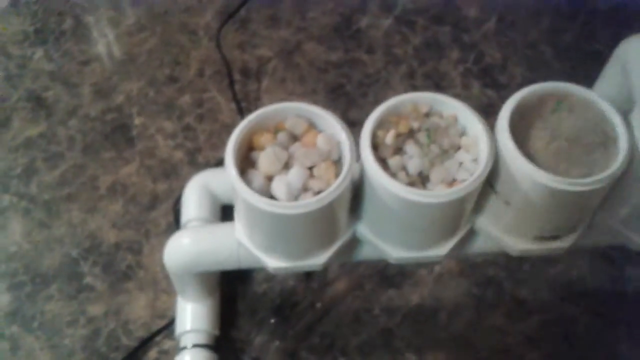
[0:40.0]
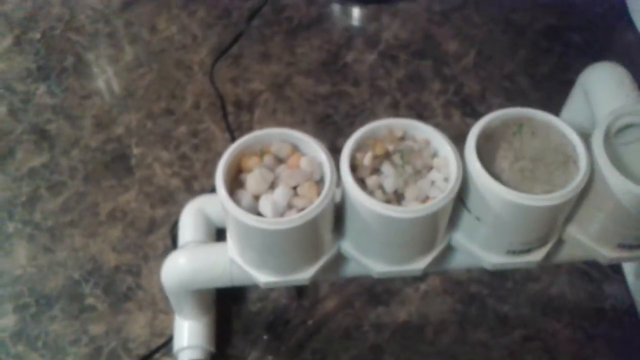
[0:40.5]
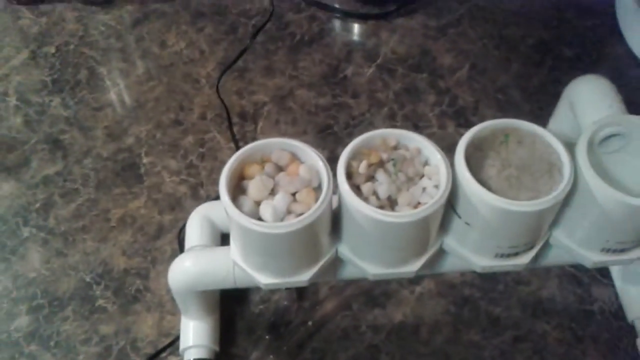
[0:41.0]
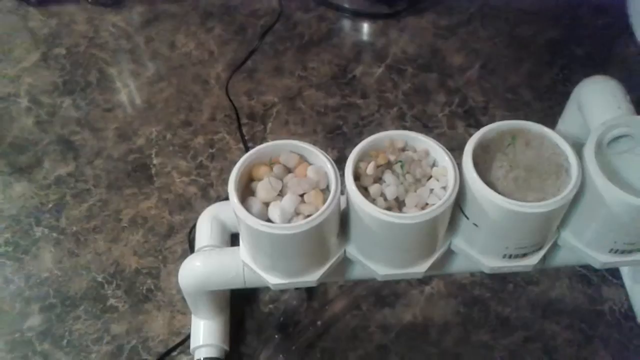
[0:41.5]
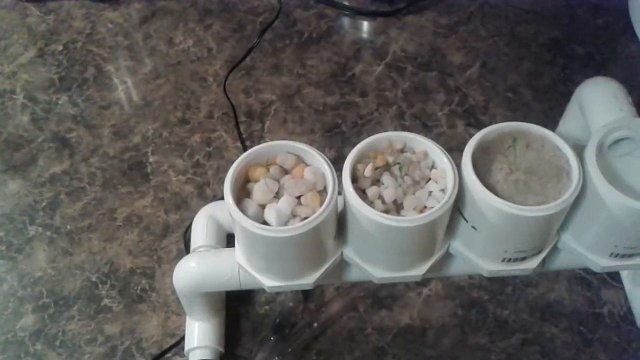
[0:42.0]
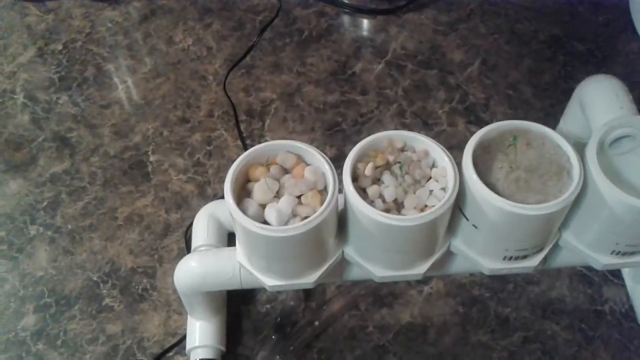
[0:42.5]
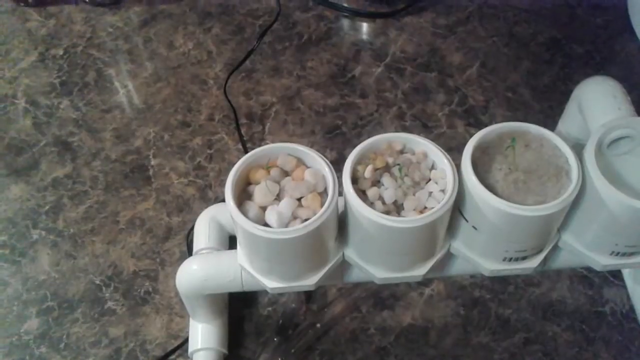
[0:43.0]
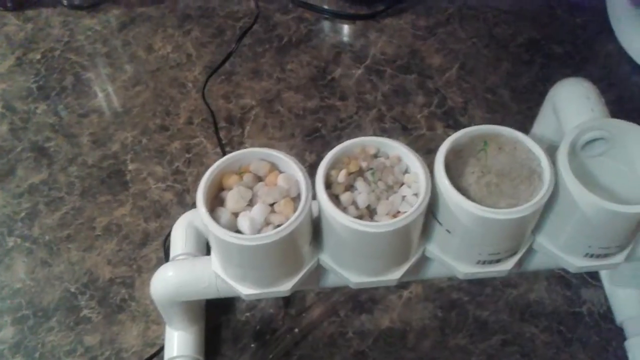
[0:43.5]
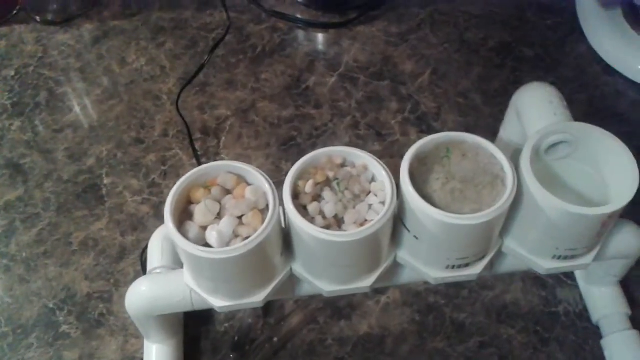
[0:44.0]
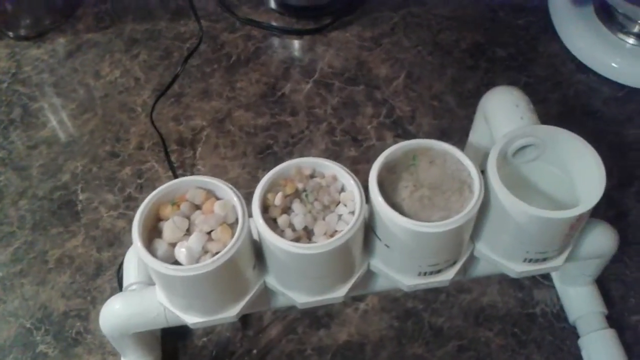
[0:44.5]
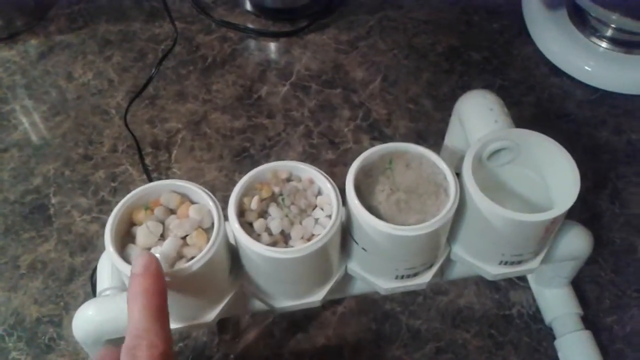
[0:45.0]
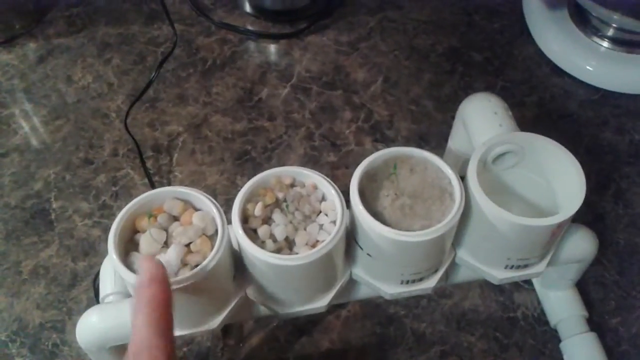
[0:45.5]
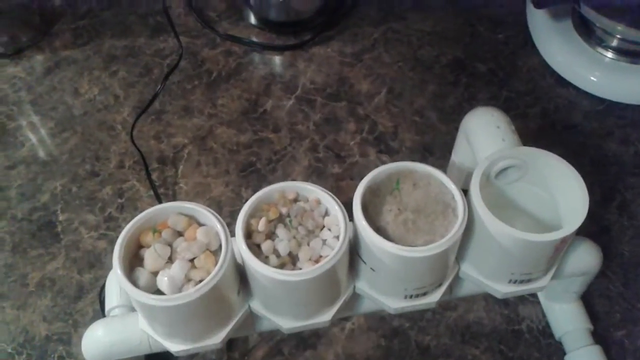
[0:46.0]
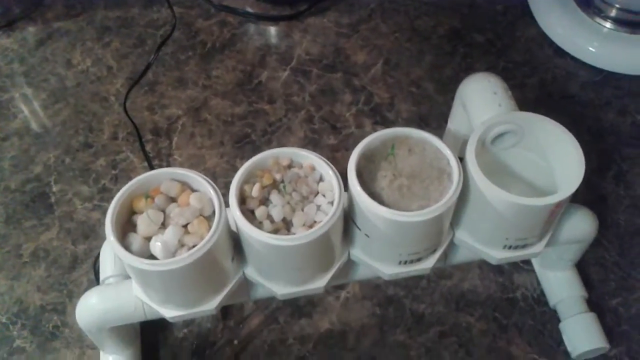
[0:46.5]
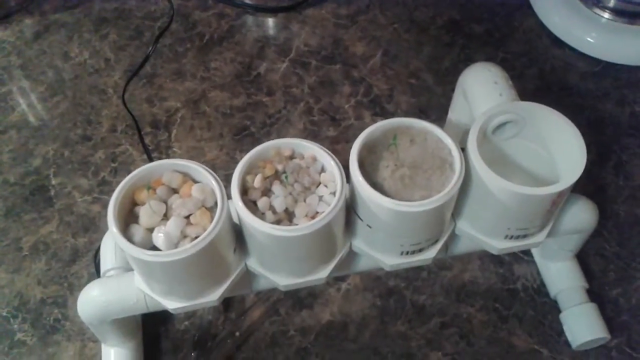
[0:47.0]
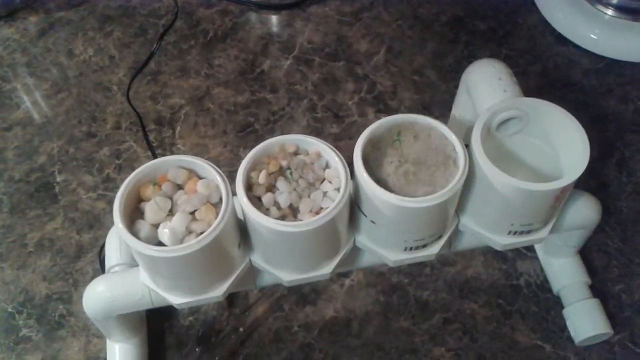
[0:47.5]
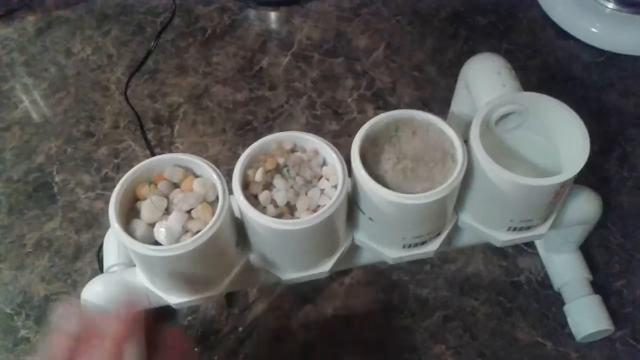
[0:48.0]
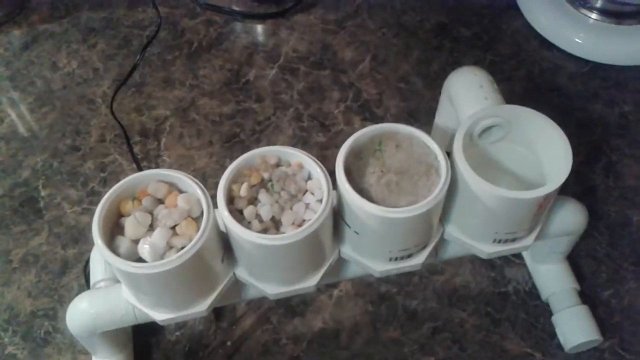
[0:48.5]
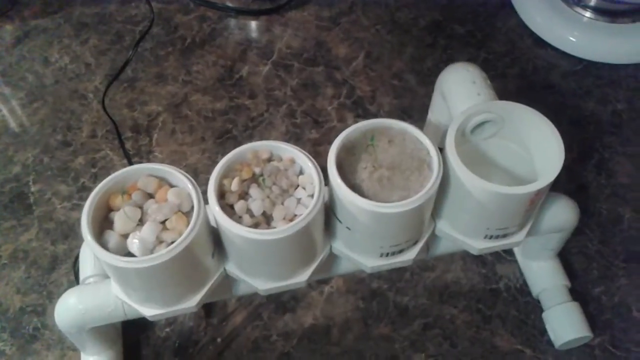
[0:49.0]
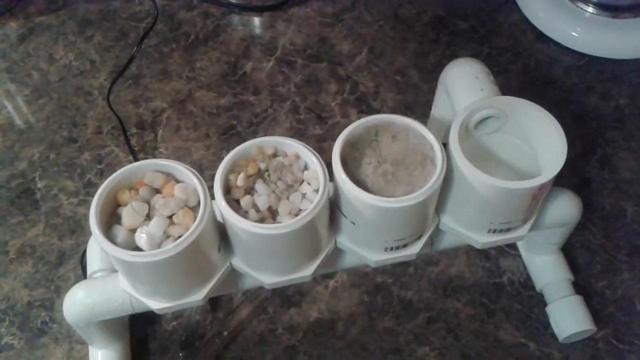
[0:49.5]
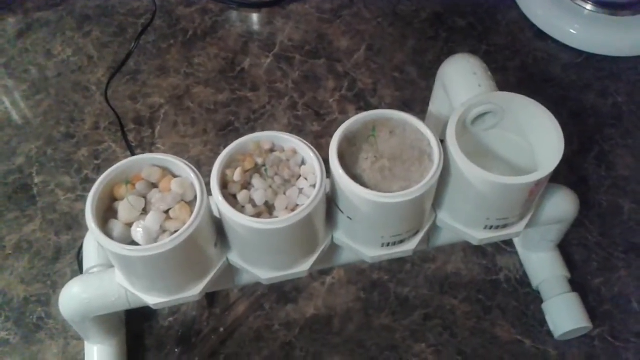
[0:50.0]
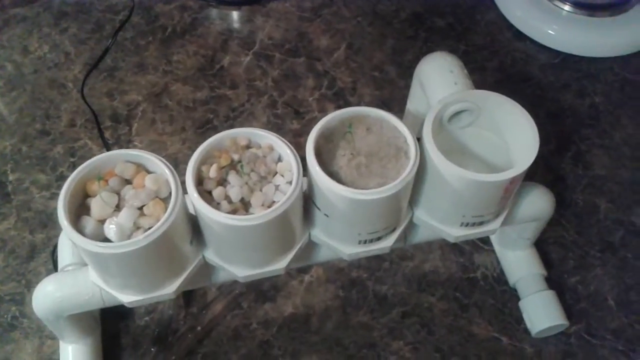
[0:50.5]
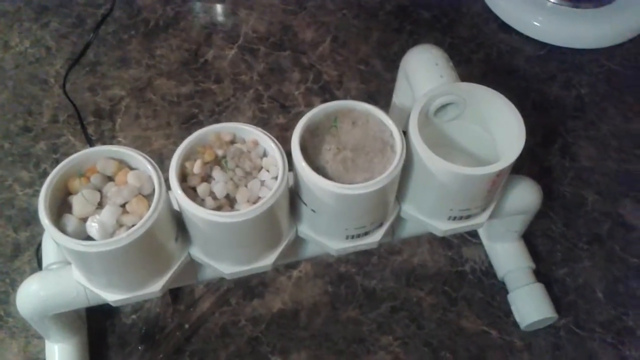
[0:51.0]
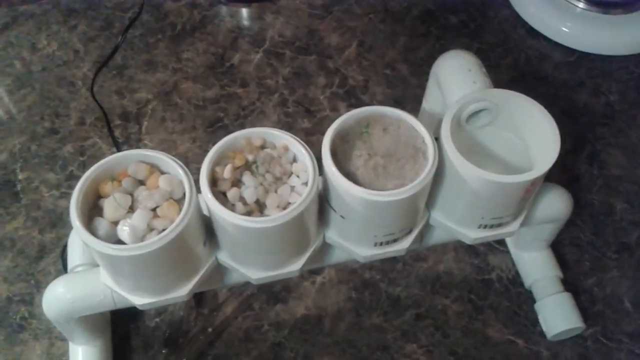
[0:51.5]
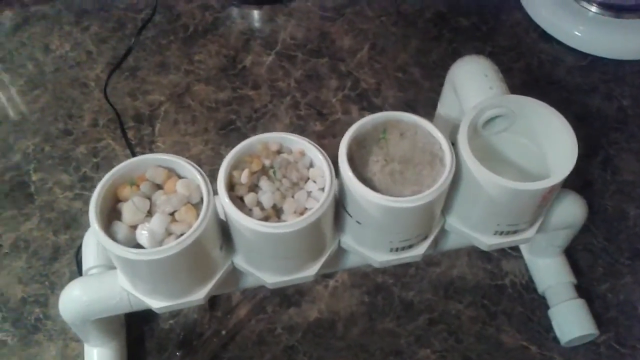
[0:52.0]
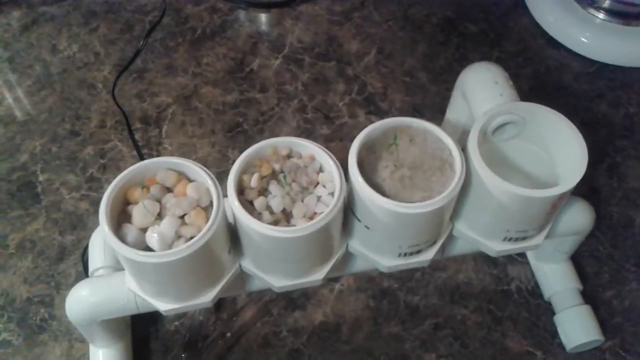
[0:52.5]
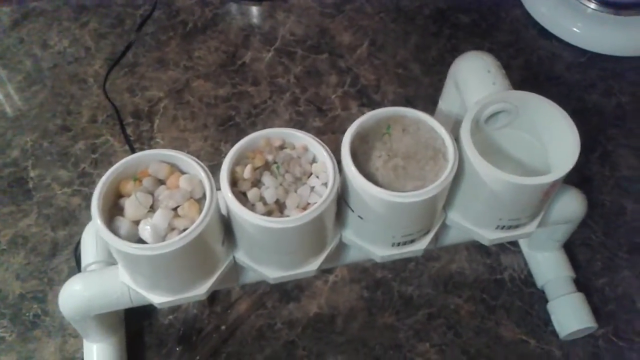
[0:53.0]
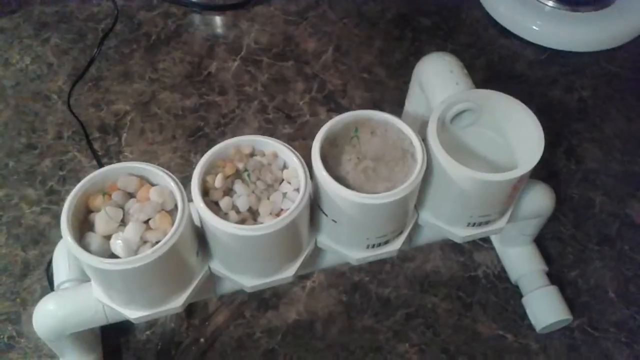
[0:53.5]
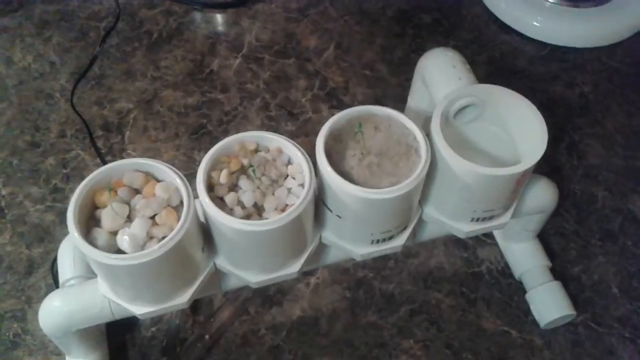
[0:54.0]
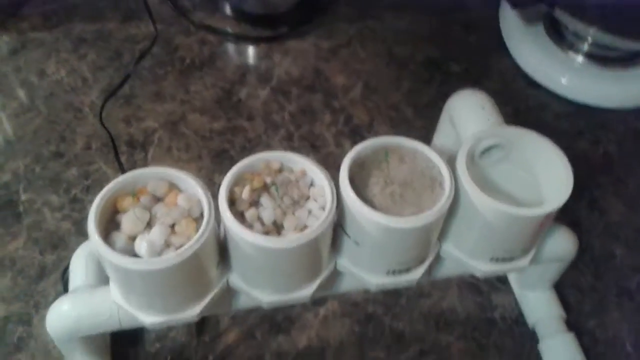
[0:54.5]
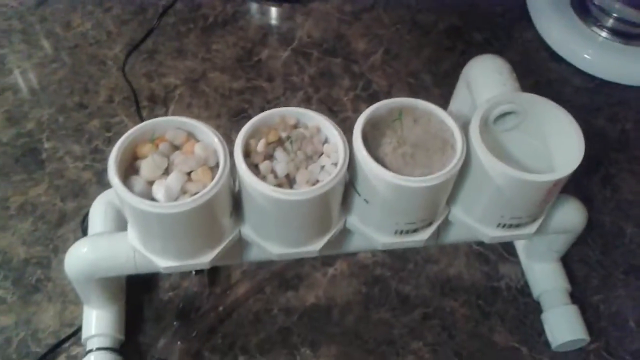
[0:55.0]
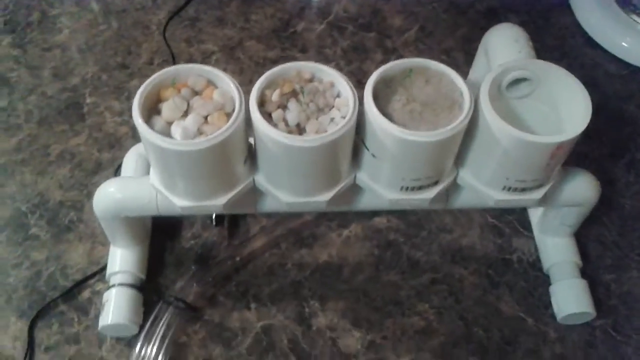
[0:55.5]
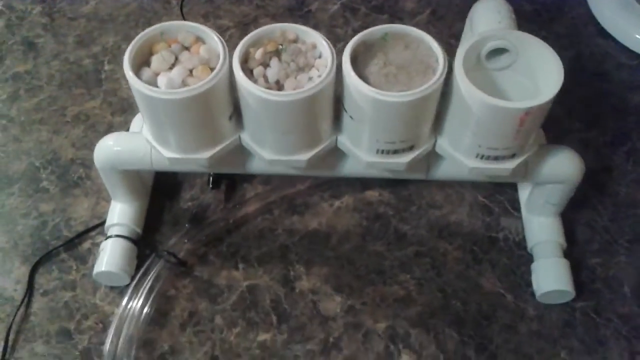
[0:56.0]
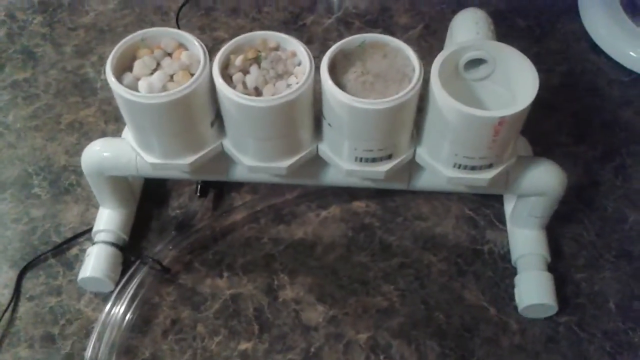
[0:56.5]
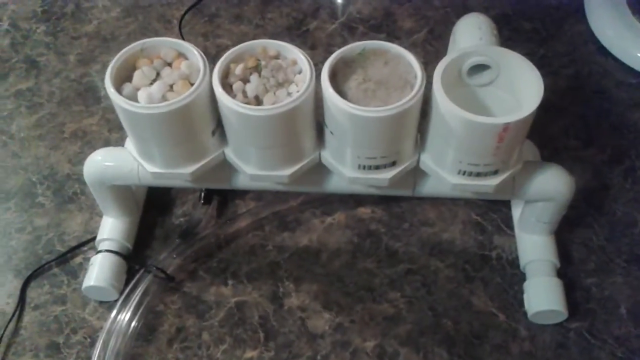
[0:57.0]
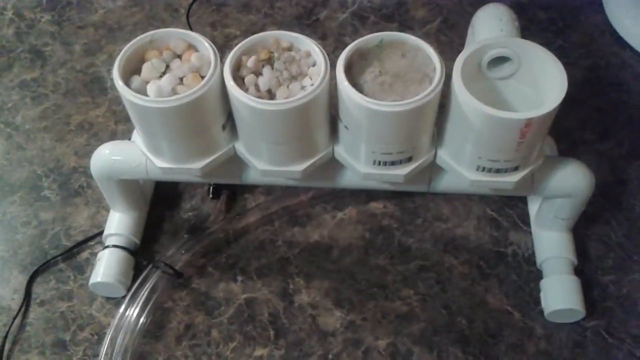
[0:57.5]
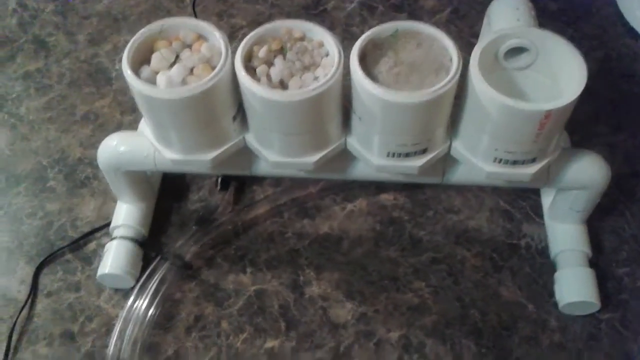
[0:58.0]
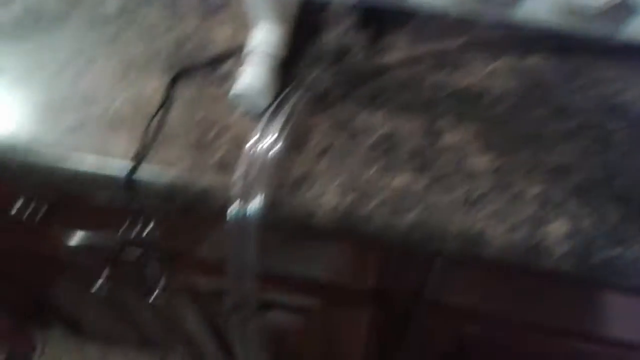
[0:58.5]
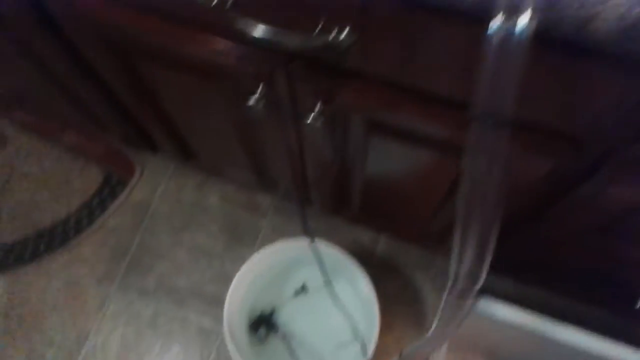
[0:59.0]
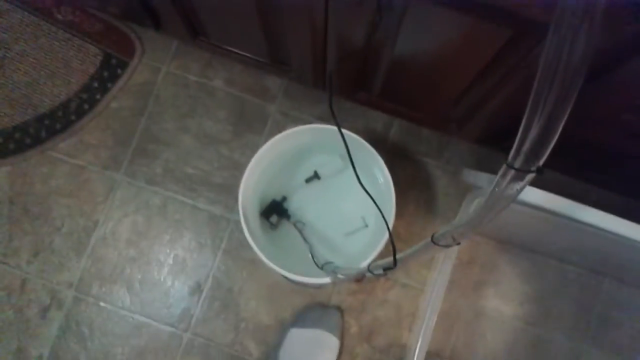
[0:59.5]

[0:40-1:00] A closer look at the setup in the DIY how-to video shows a very tiny stem in it. Of the cylinders, the two on the left have rocks, with bigger rocks in the one on the very left, and another holds what looks like clay or sand. One is empty and has a tube coming out of it. The guy points toward the cylinder with the big rocks while the camera wiggles around. Tubing comes out of the setup, and a bucket full of water is on the ground, possibly part of a siphon. A tube runs into the bucket, and there is apparently an electrical pump. One of the cylinders is not full and has a hole with a tube out the back.